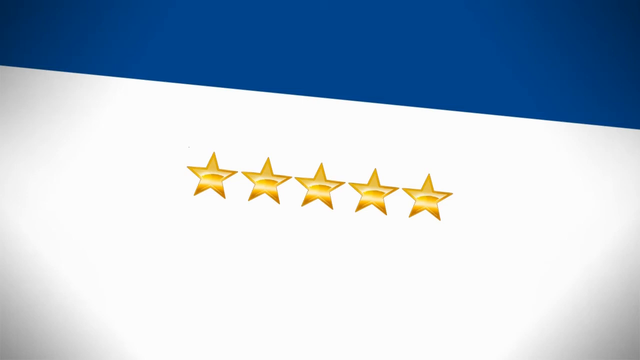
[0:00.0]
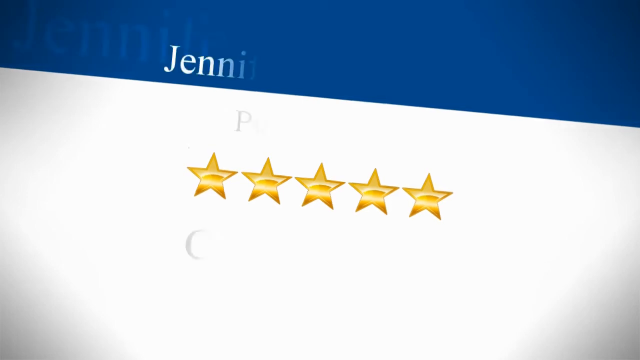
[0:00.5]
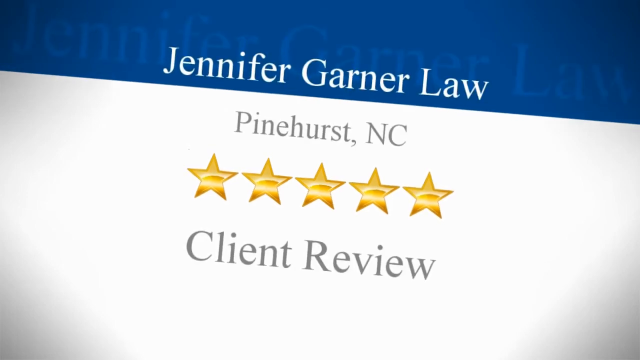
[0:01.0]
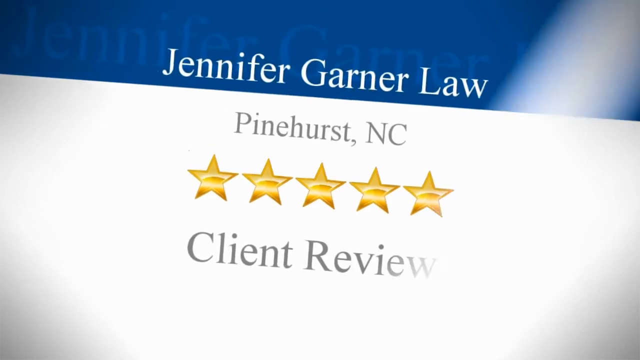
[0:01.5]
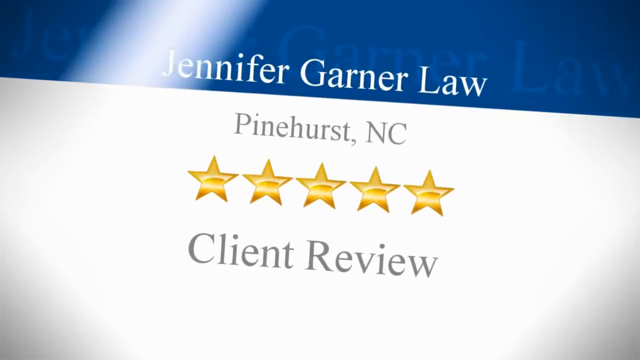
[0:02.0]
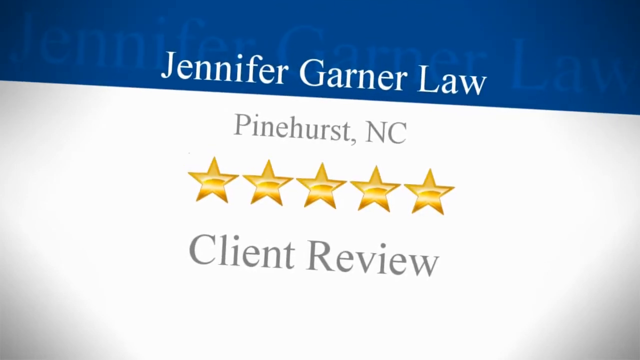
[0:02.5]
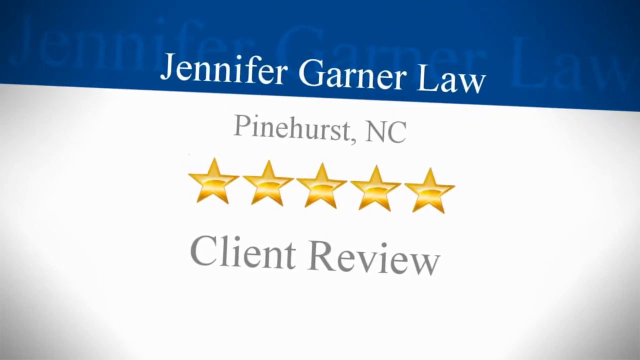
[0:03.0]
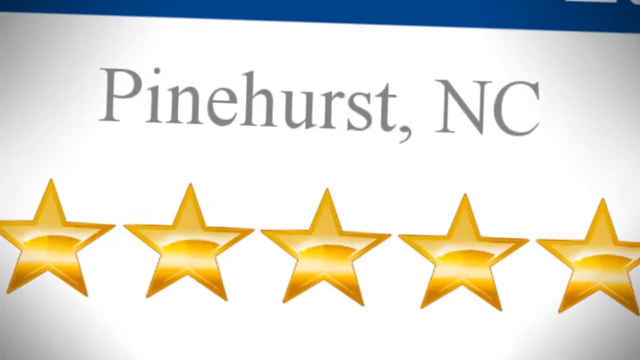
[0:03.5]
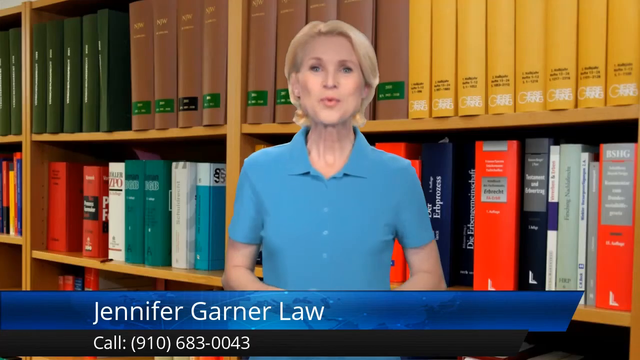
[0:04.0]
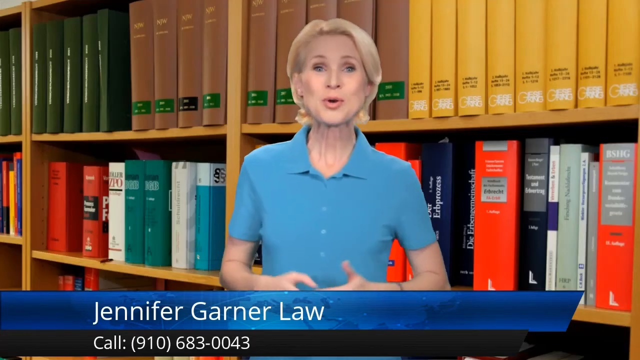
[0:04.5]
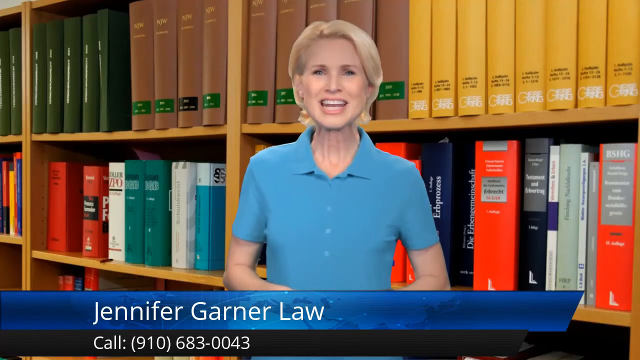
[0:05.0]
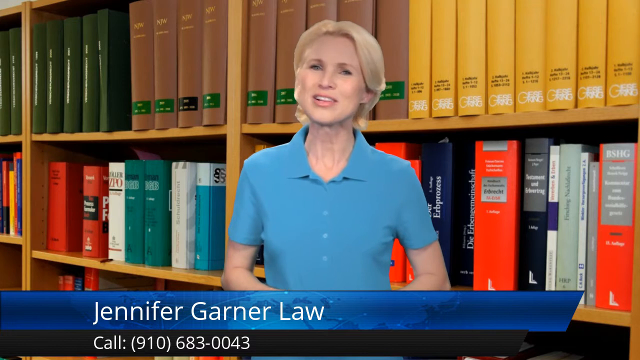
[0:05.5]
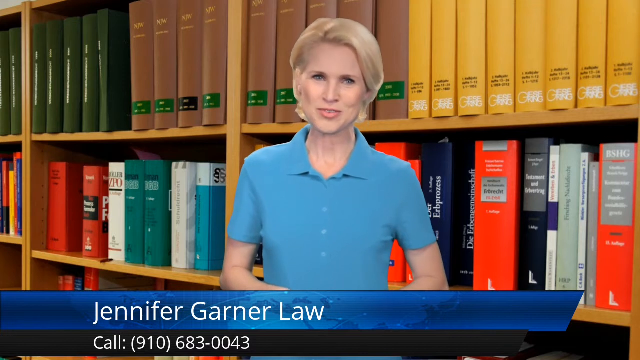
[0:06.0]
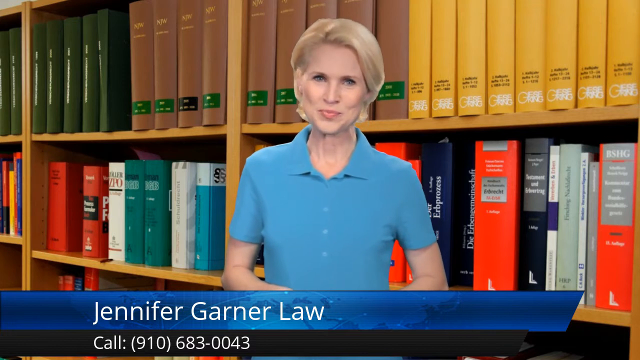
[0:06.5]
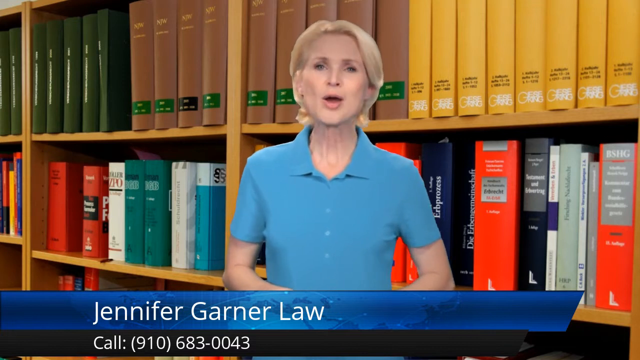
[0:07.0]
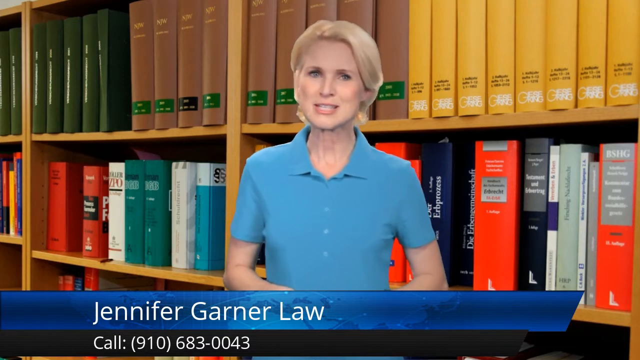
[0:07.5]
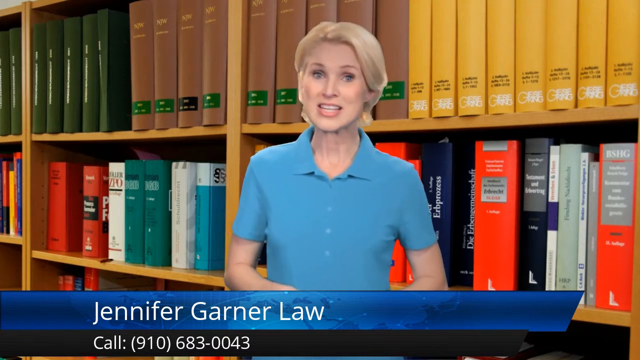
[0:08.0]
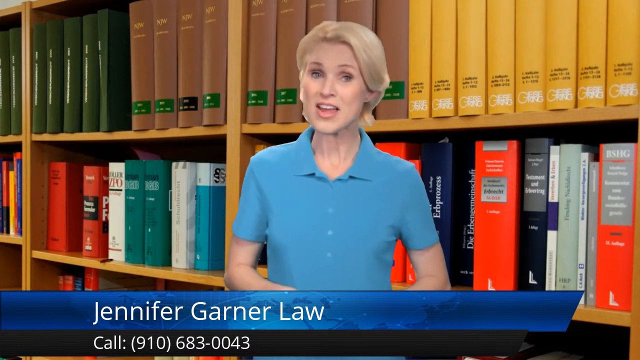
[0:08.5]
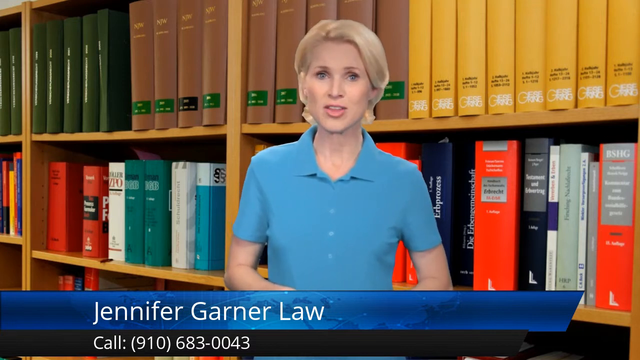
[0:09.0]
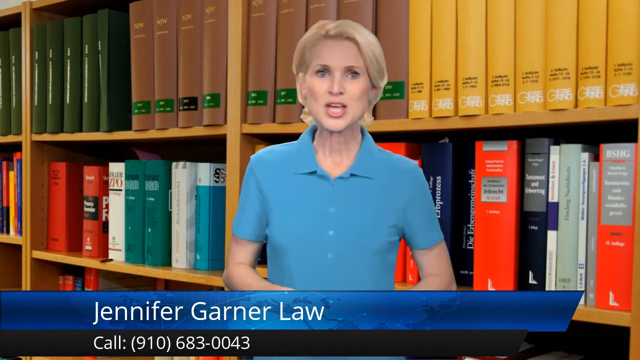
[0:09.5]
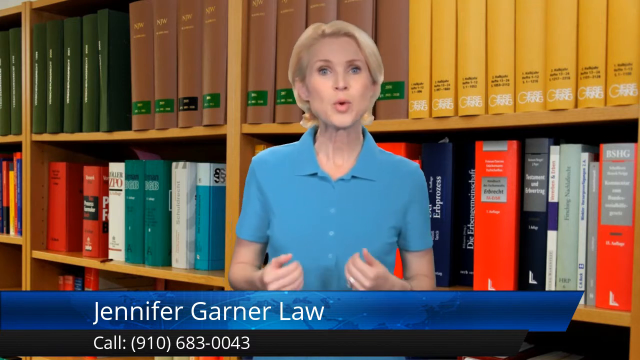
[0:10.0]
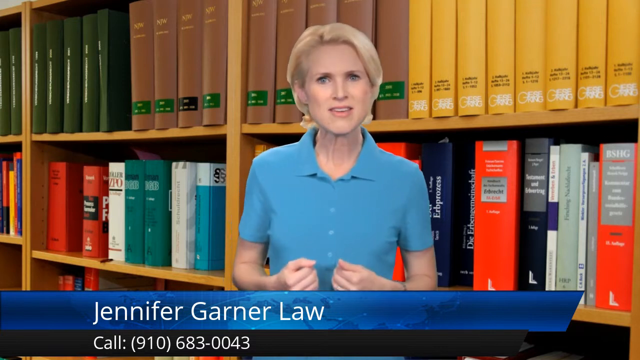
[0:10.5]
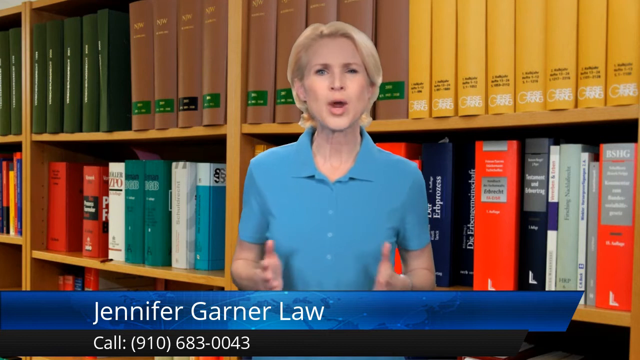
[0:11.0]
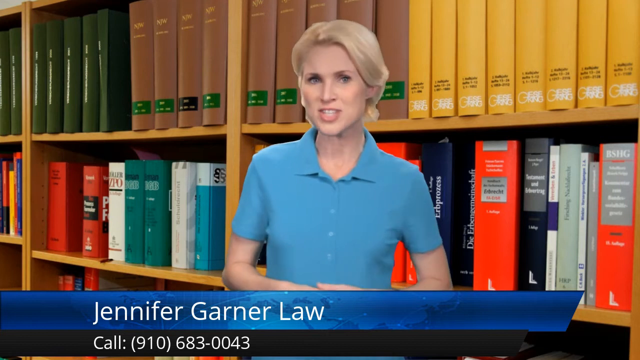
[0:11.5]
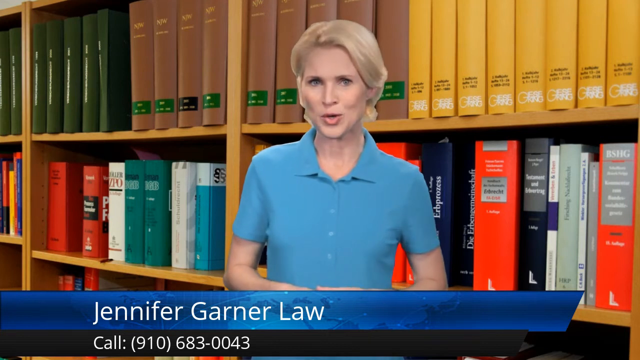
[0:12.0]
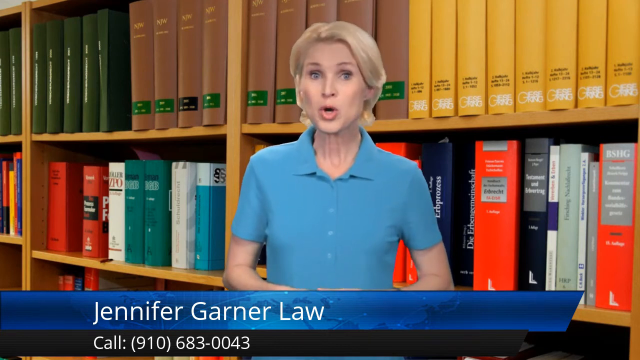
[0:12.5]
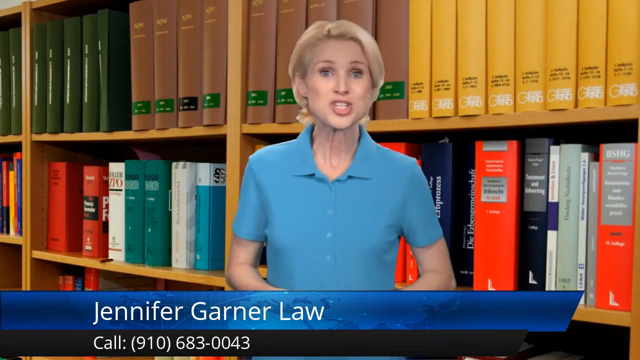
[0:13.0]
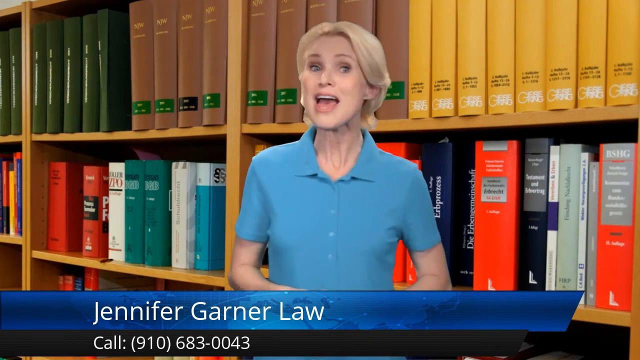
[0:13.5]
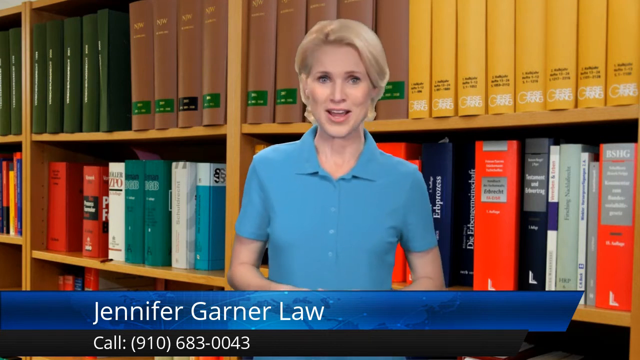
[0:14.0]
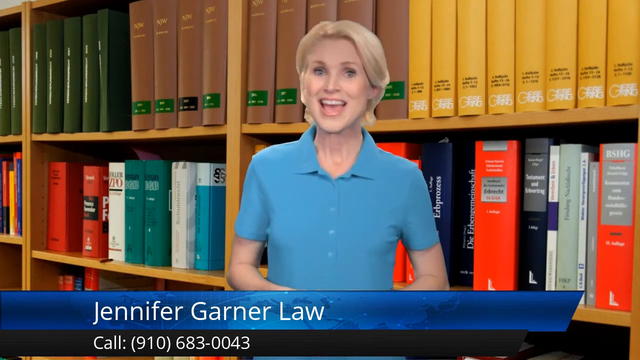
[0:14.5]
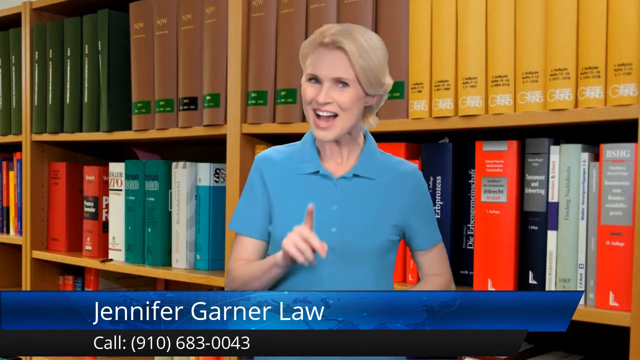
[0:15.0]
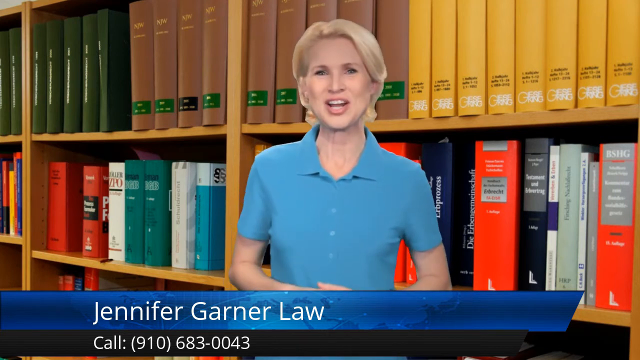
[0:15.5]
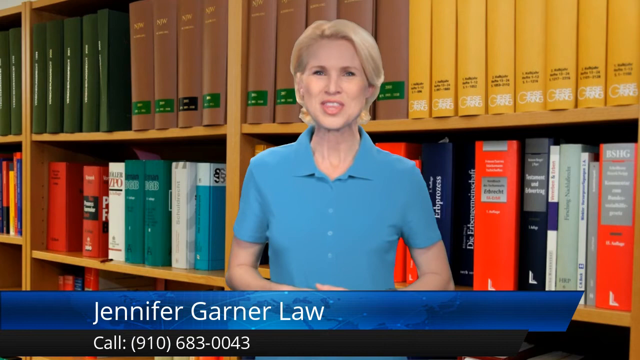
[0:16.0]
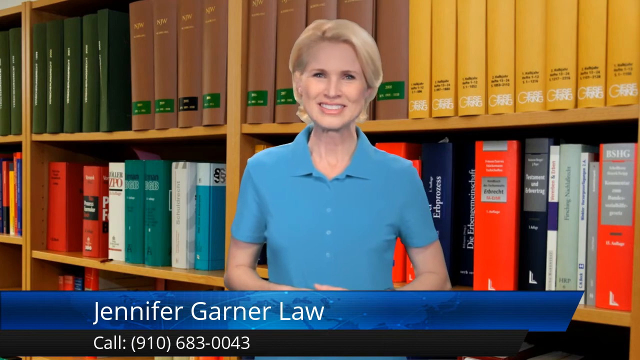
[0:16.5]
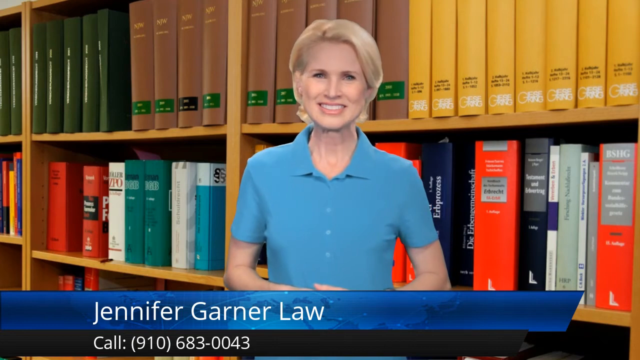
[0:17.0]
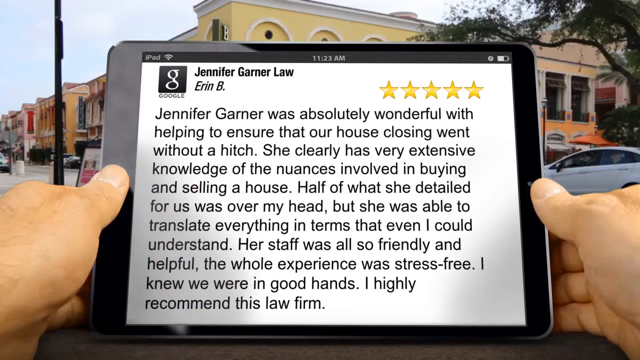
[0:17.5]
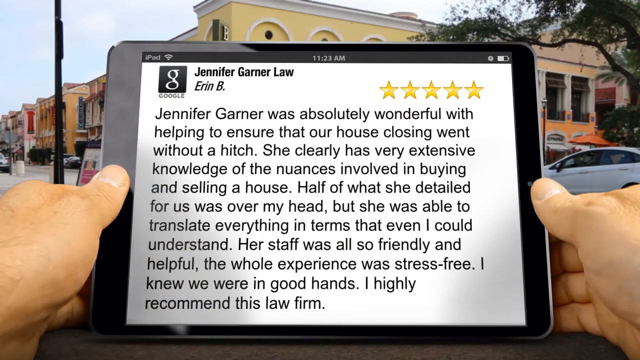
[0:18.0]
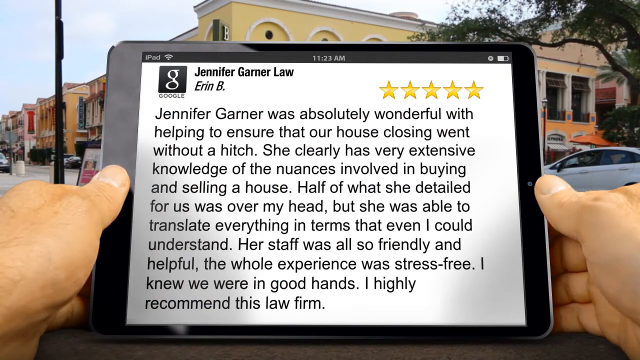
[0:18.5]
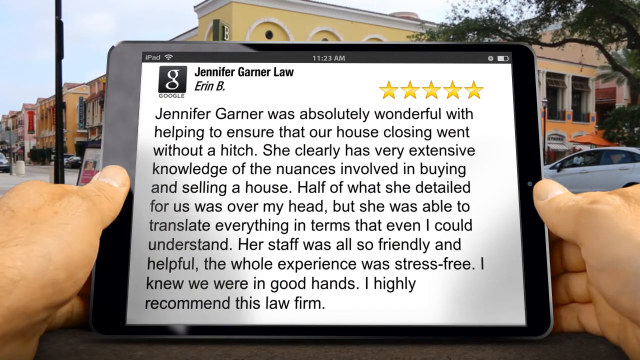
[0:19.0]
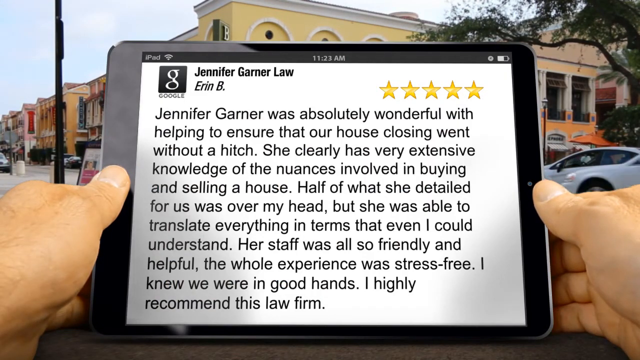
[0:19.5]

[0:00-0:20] The video opens on a graphic for Jennifer Garner Law, Pinehurst, NC, with five stars and the text "client review" beneath them. The graphic zooms in towards the viewer as a transition to the next scene, in which a woman with short blonde hair and a blue shirt stands facing the camera and speaks directly to it. A banner below her reads "Jennifer Garner Law" and "call 910-683-0043." Behind her is a green screen showing an image of a bookshelf filled with various books. She speaks very animatedly, her head moving and her hands gesturing. The scene then transitions to a point of view of an iPad, with two hands visible holding it, as if from the perspective of the person holding the iPad.